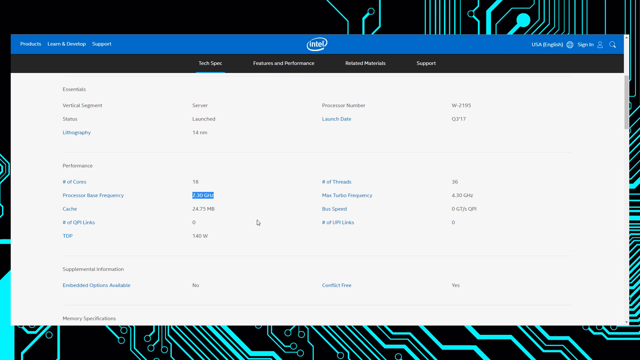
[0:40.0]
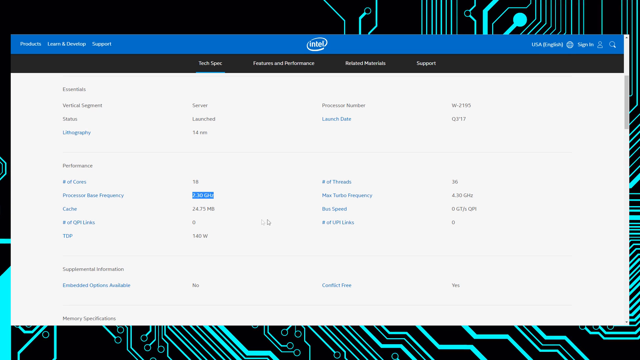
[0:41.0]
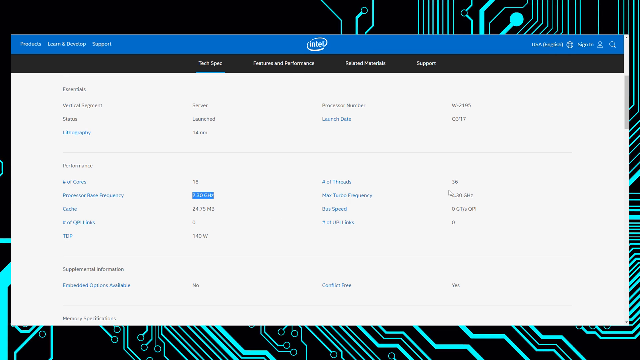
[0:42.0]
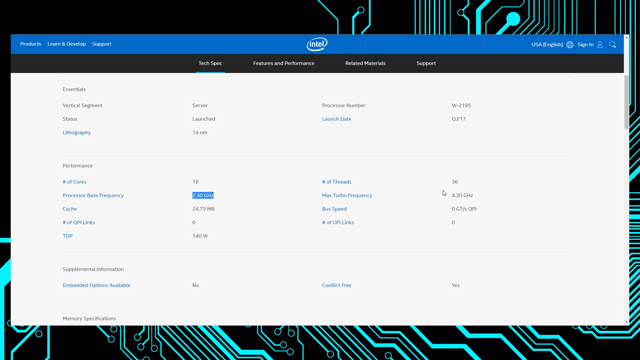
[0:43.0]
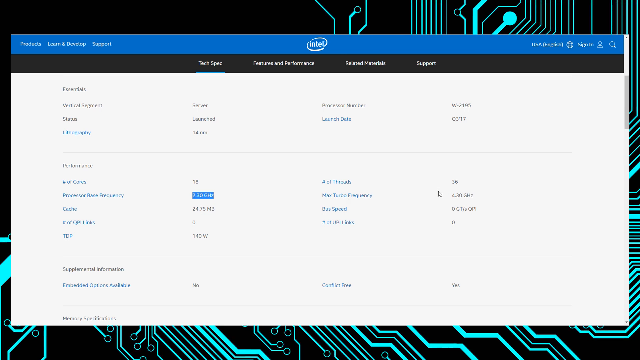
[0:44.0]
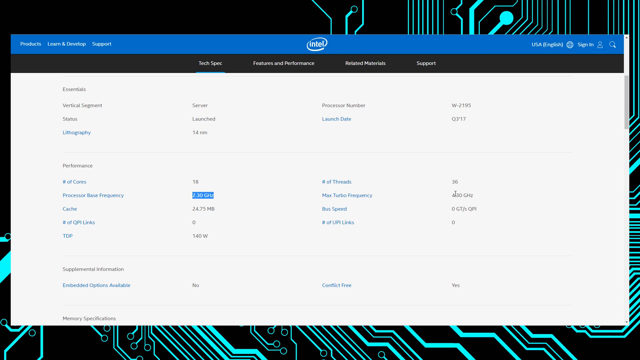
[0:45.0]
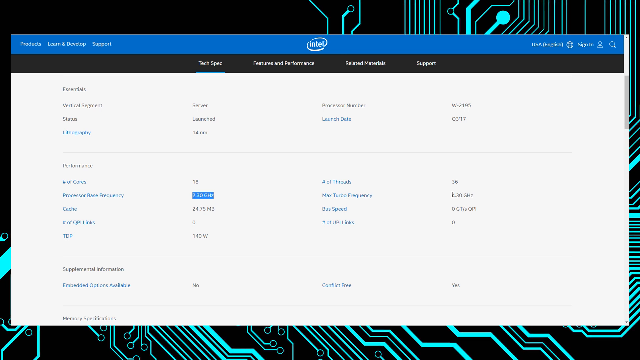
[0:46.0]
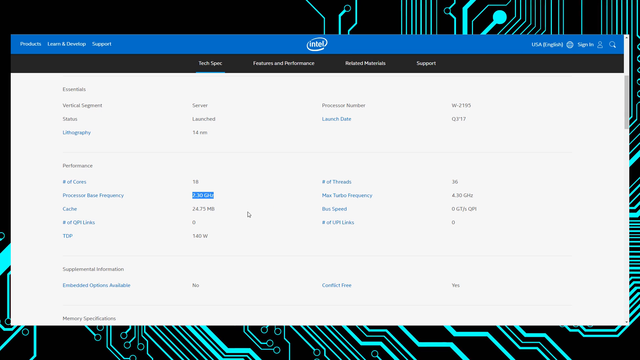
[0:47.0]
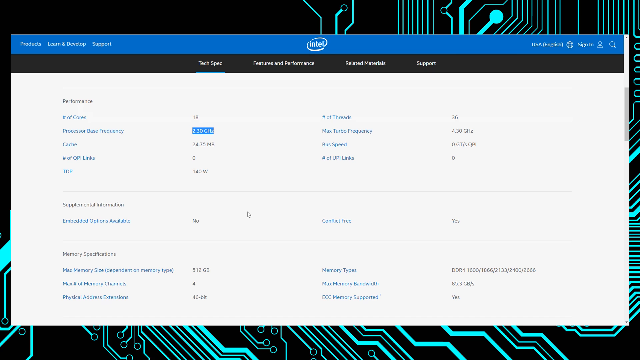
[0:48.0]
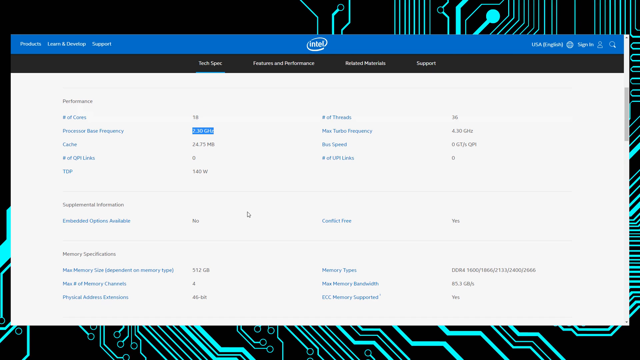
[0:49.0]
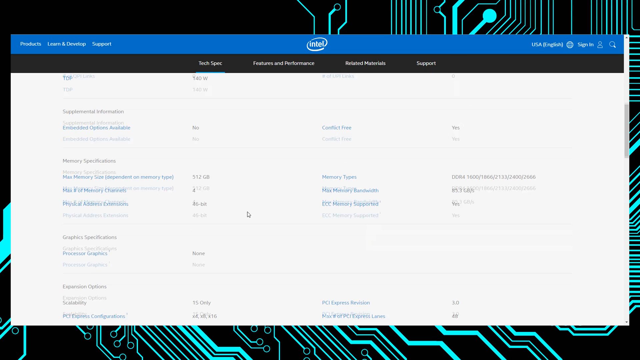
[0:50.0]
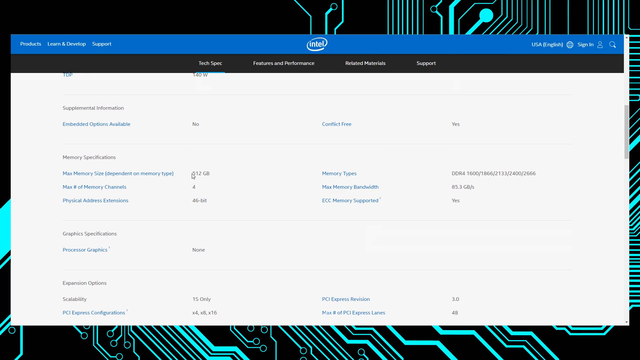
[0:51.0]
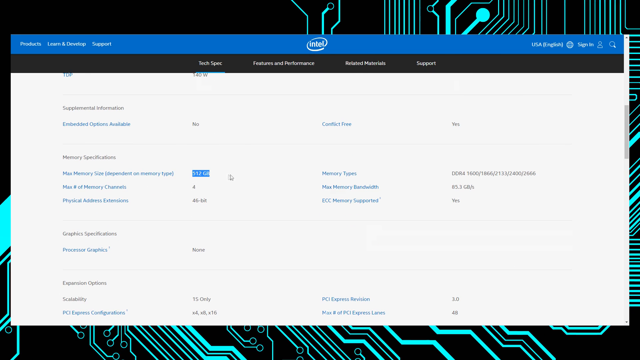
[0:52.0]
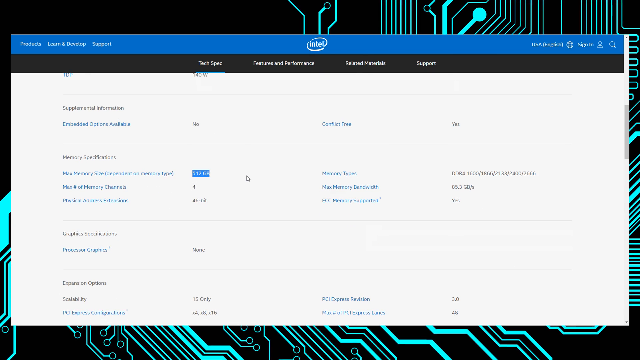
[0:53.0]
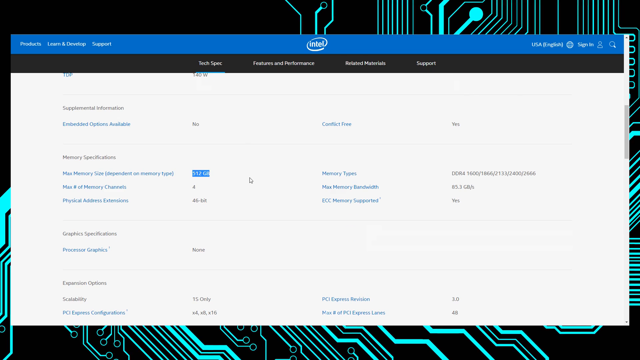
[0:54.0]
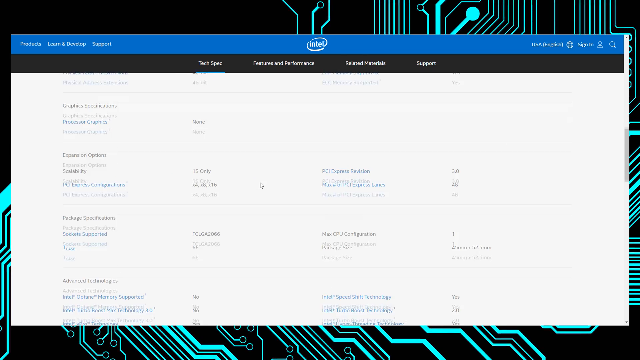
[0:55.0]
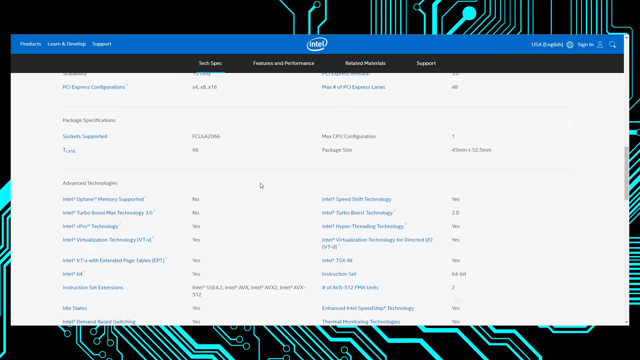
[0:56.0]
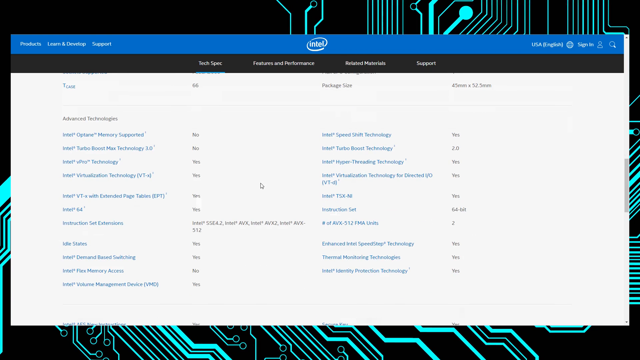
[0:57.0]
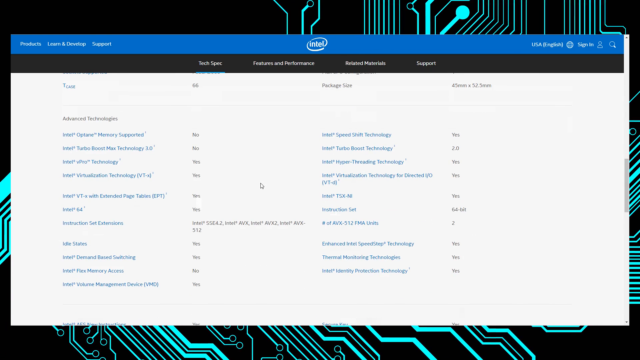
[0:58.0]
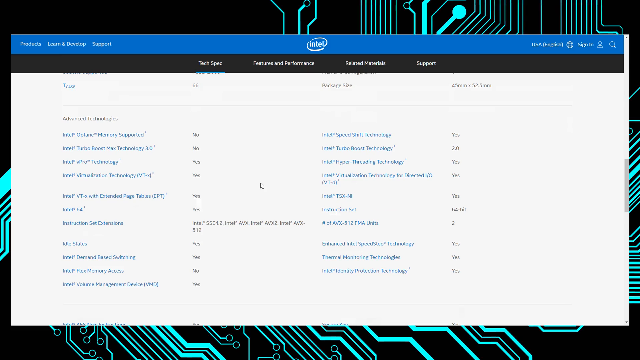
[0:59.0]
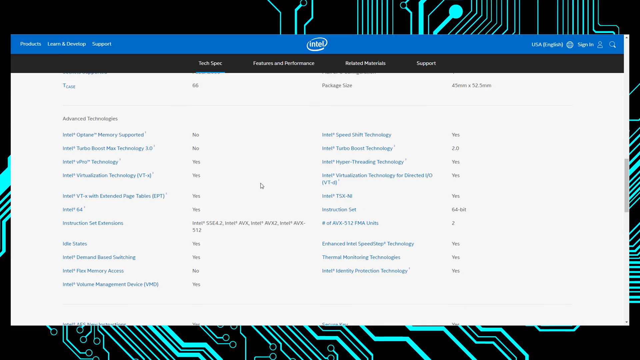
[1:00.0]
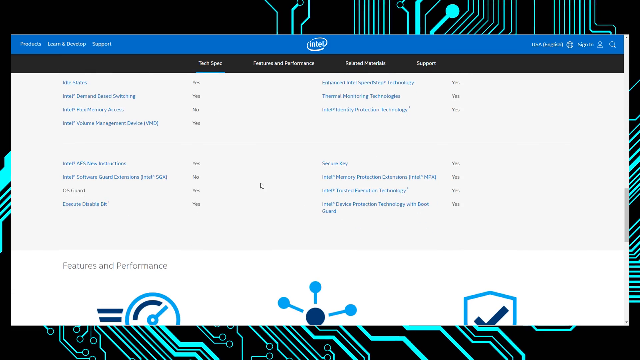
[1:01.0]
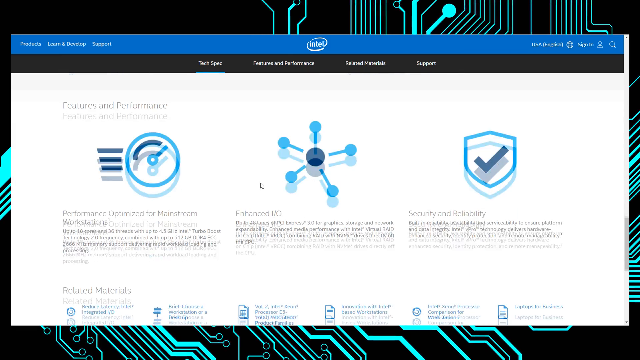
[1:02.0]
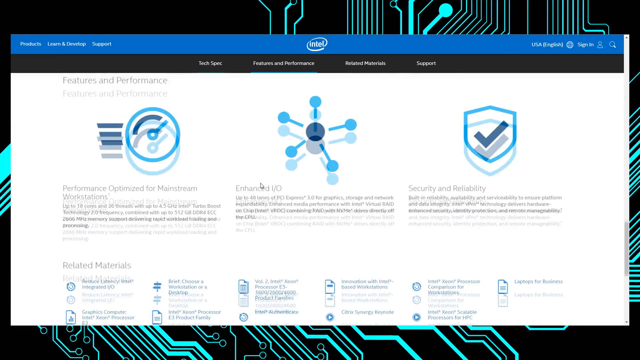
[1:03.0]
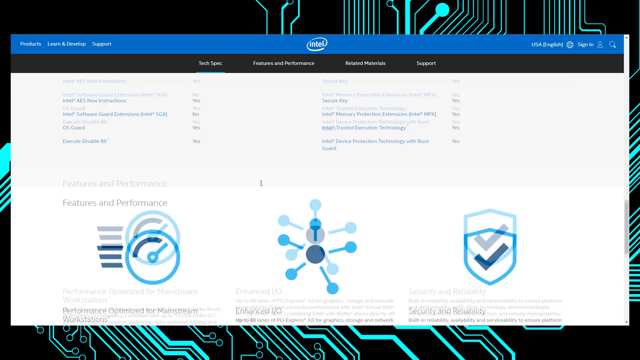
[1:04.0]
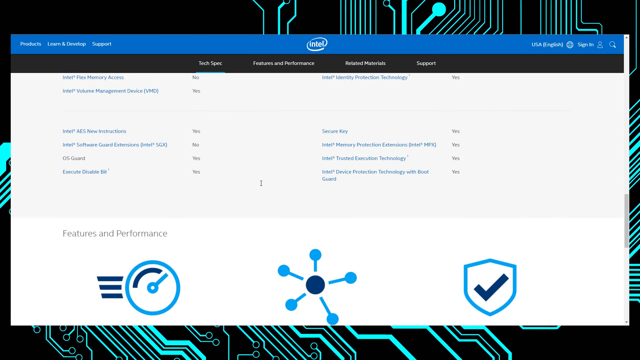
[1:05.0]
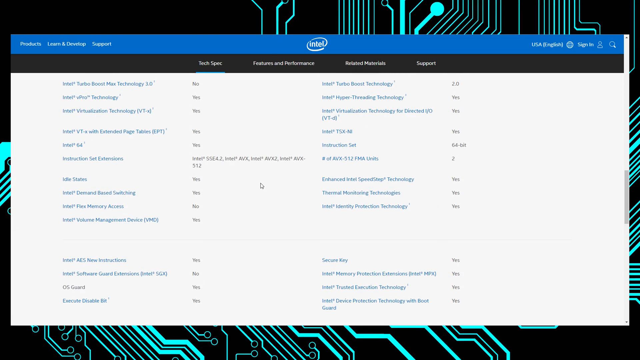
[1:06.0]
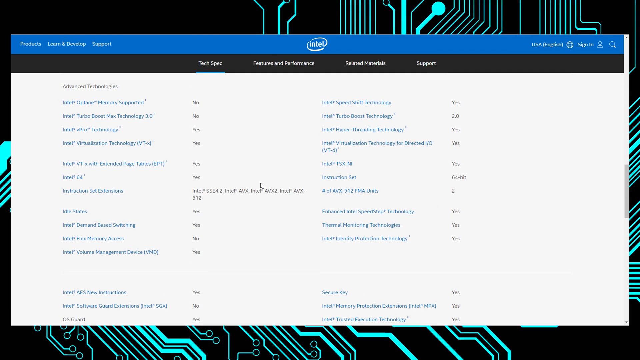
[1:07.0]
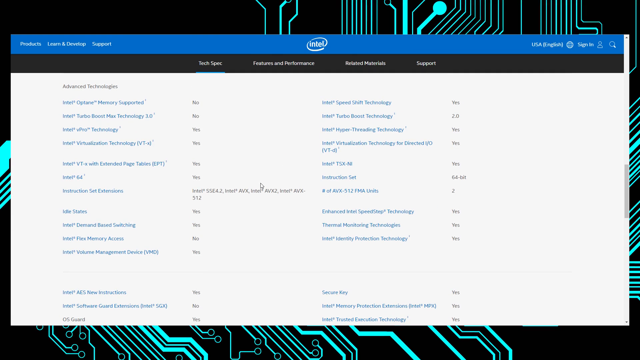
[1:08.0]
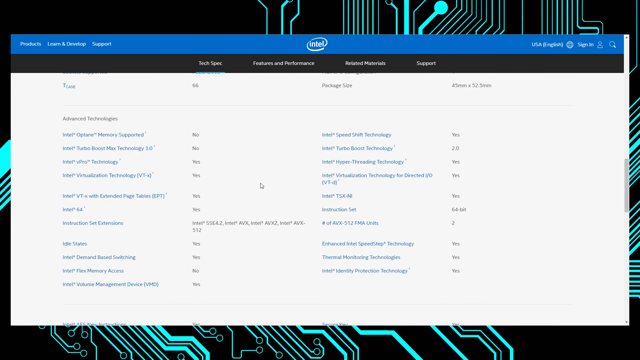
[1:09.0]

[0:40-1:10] On screen, the person looks at further frequency information, then clicks the mouse and scrolls down to other specifications, including graphics specifications and memory specifications, highlighting one of the selections. An advanced technologies section appears as a list of yes or no entries covering various technologies, features, and performance. There are some graphics. Everything on the page is white with blue coloring, and it looks like an Intel website with the Intel logo at the top. The page is quite detailed, with more logos and presentations below, and the spec data includes some images along with features and performance. As the screen turns, the futuristic computer background with the Tron-like blue-green graphic is still somewhat visible.